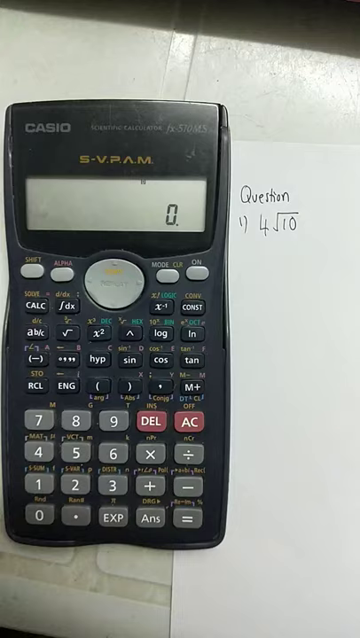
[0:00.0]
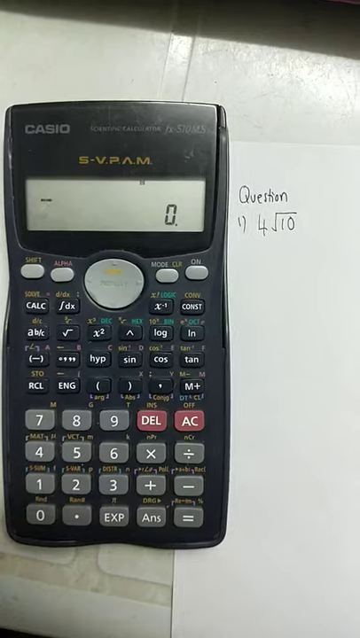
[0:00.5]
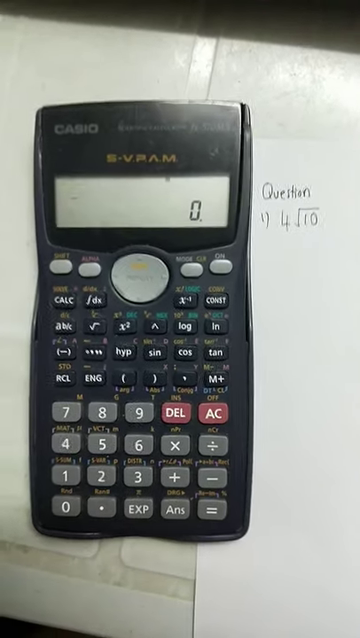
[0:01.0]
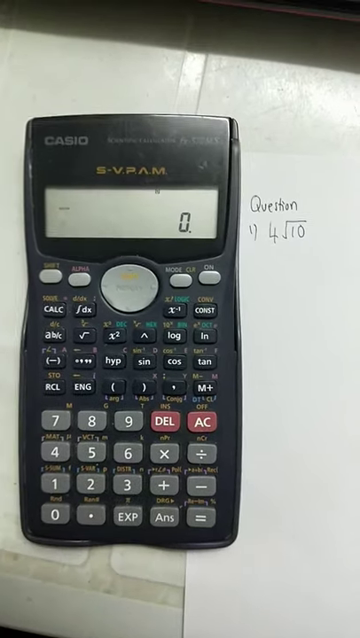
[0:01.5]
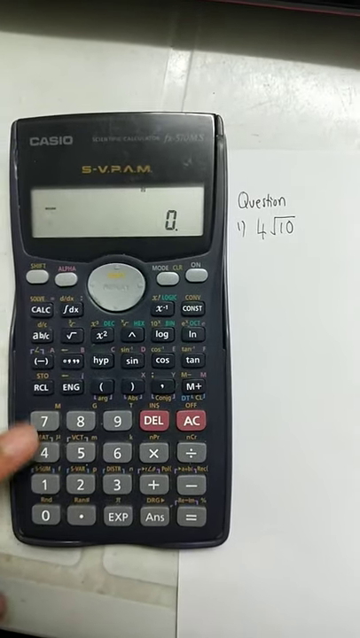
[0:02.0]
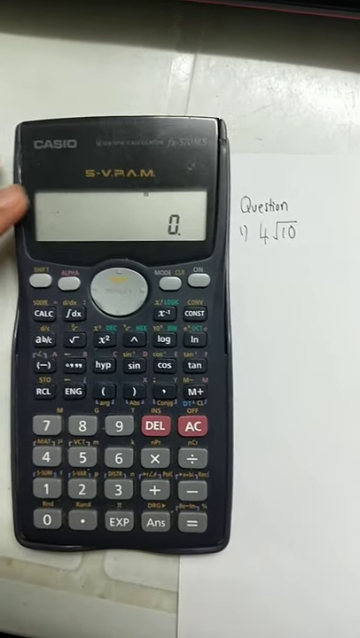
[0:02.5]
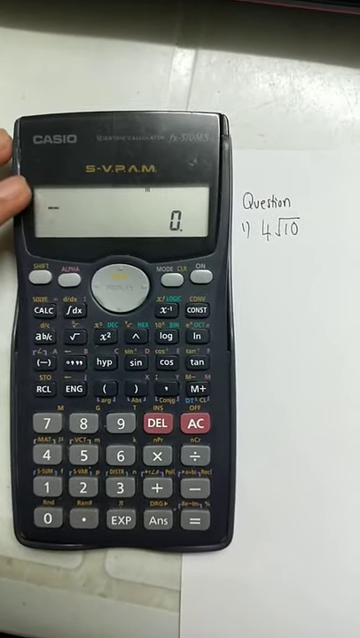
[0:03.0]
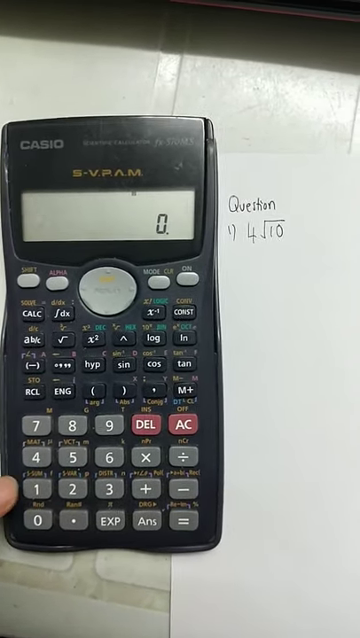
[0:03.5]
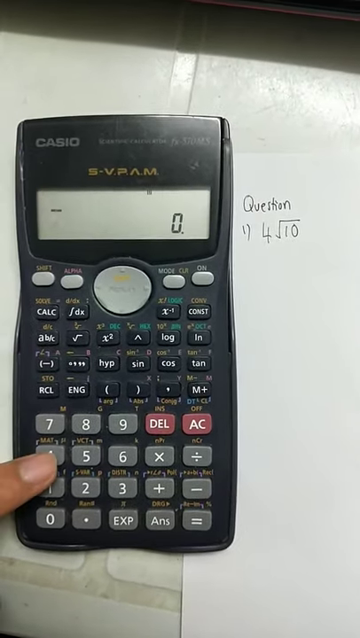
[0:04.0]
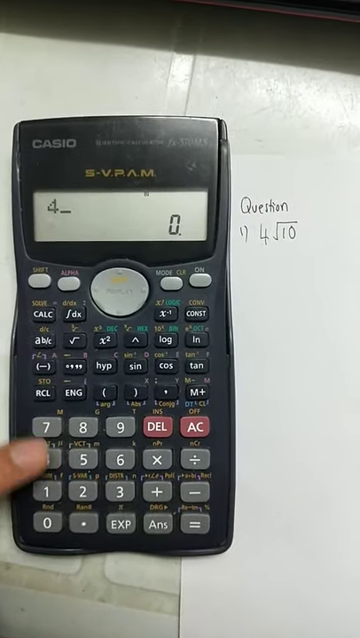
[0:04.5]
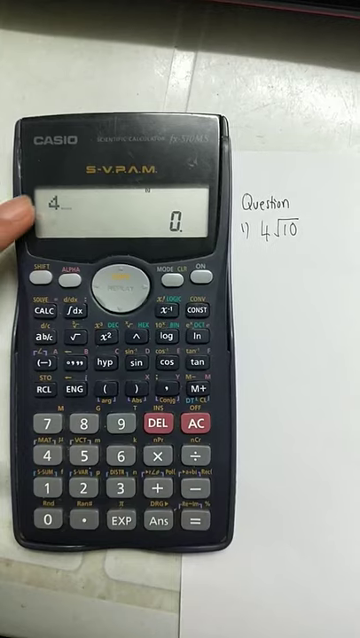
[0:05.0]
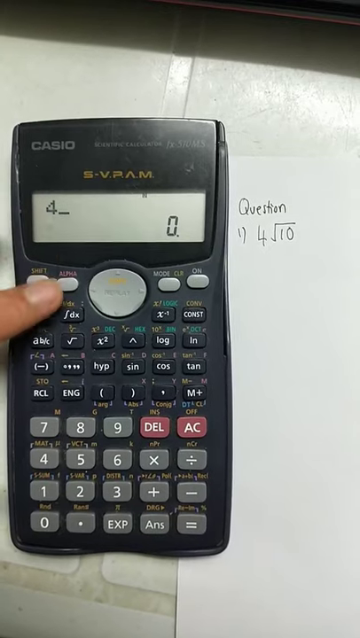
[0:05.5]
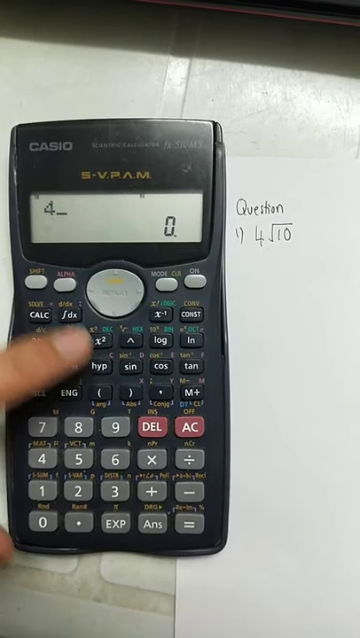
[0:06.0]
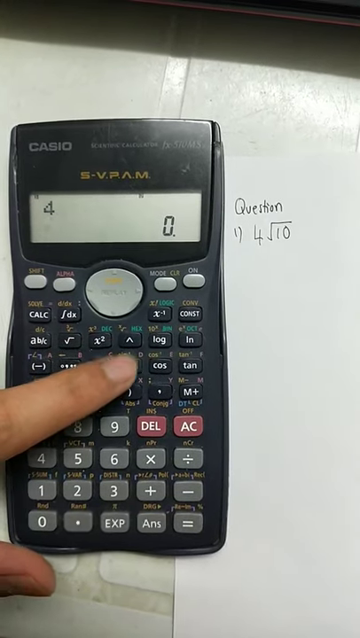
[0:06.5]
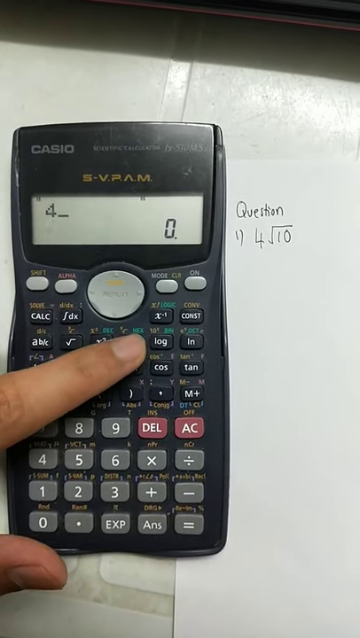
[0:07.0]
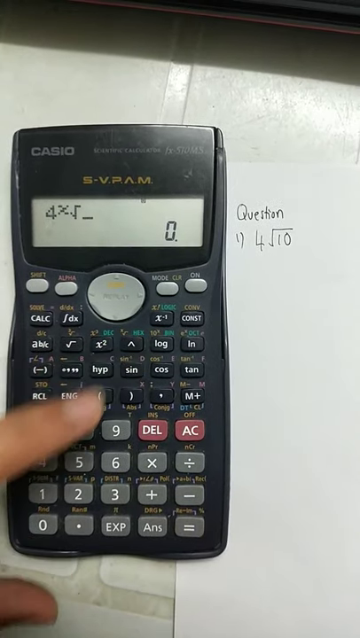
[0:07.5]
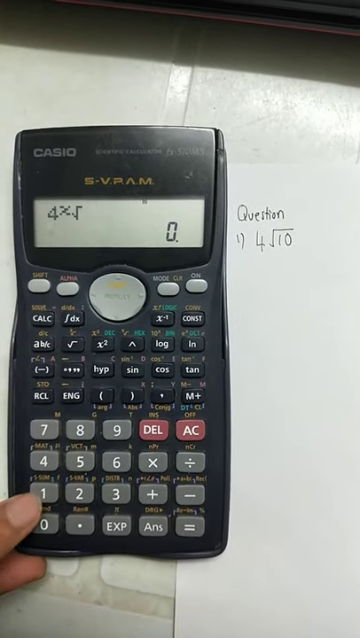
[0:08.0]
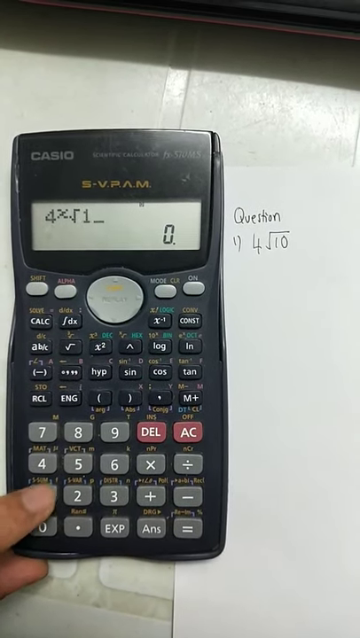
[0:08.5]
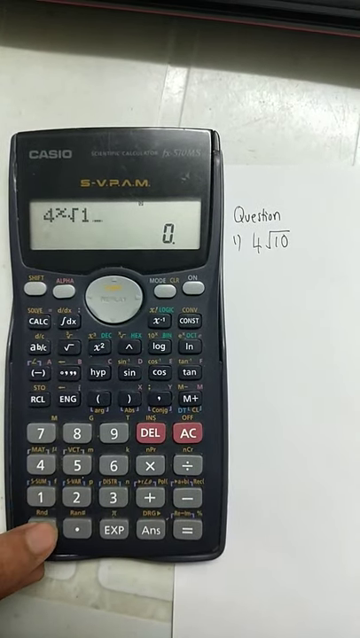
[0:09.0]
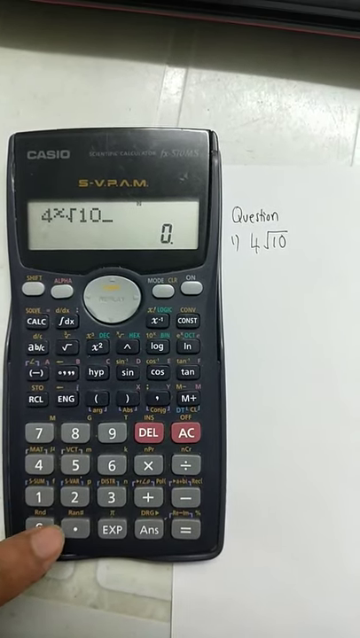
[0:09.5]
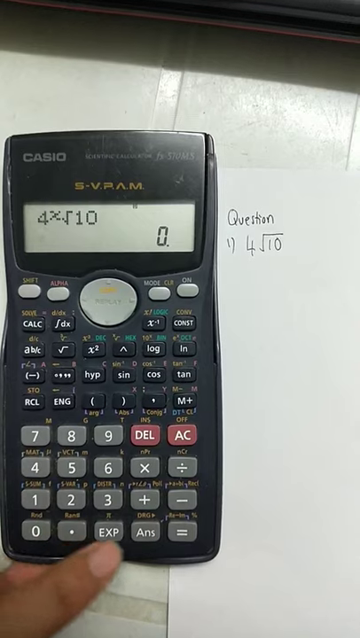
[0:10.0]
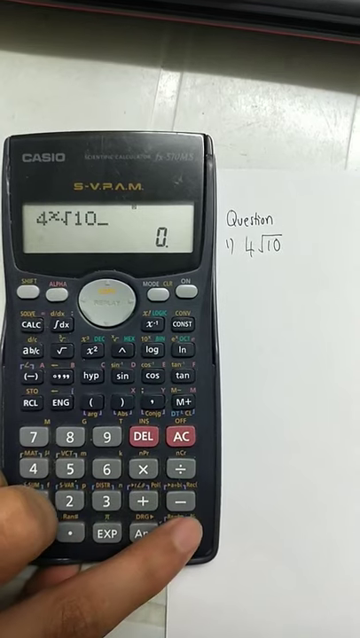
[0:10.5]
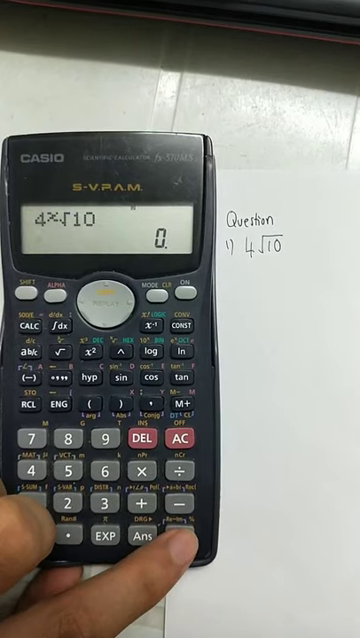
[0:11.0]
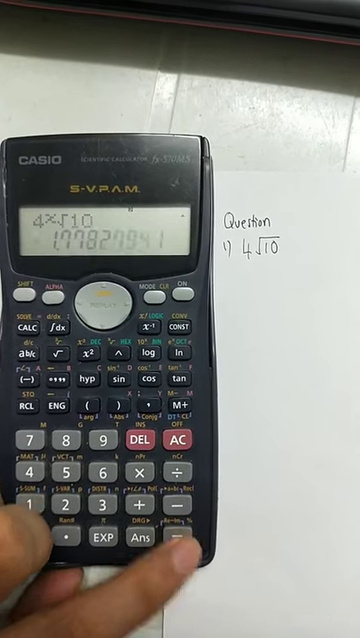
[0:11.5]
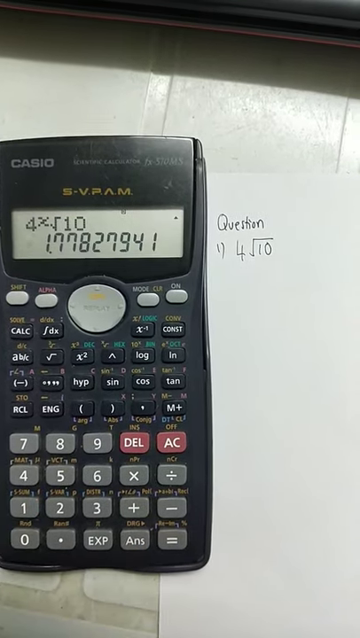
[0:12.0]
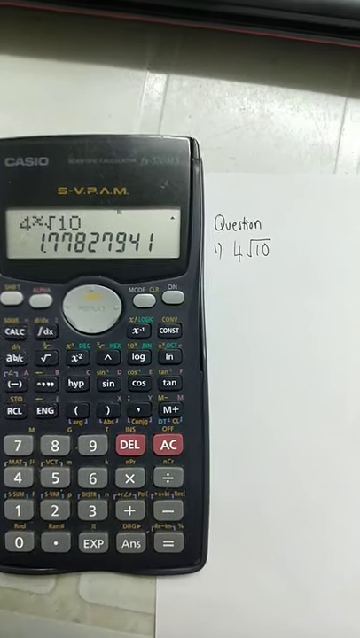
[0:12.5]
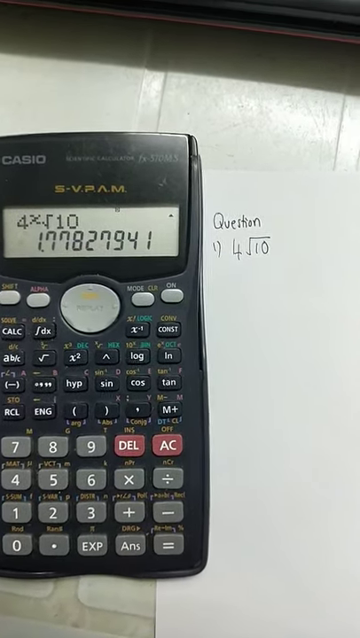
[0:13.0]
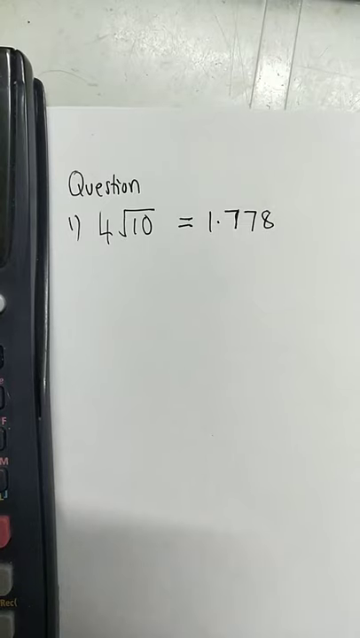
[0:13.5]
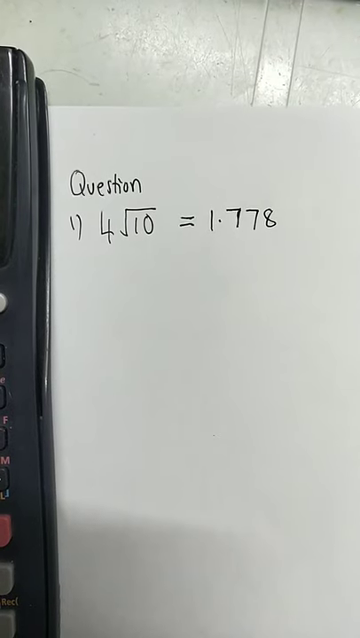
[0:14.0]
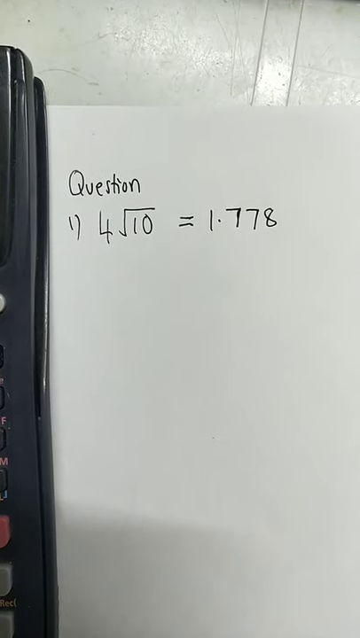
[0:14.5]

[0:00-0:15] Someone uses a Casio FX570MS calculator, apparently trying to solve question 1, which is written on the right. The person using the calculator appears to have a darker skin complexion. Question 1 appears to be 4 times the square root of 10. The person types in 4, then presses the times button and the square root button, then 10. The calculator displays 1.77 followed by more digits, exactly 1.77827941, as the answer to question 1.